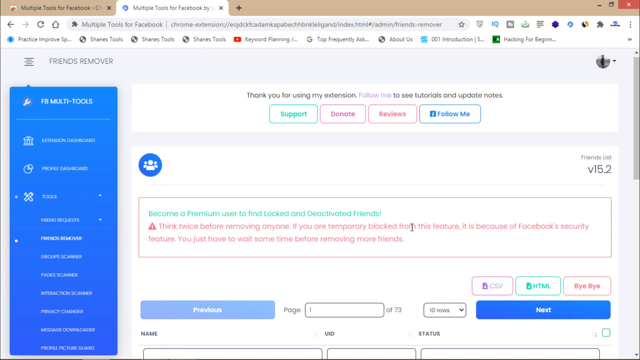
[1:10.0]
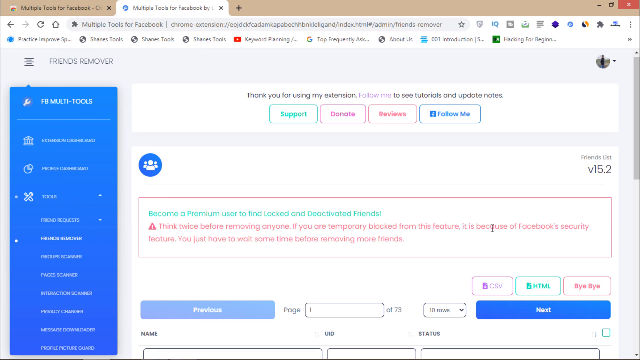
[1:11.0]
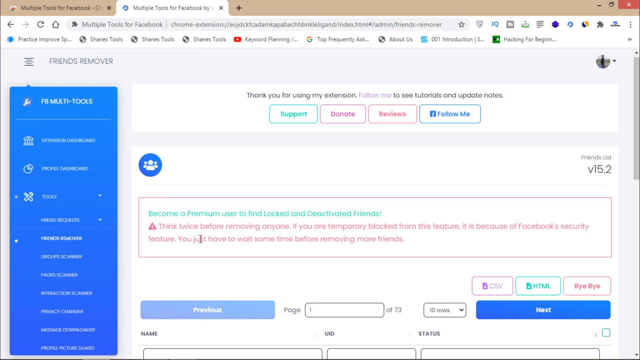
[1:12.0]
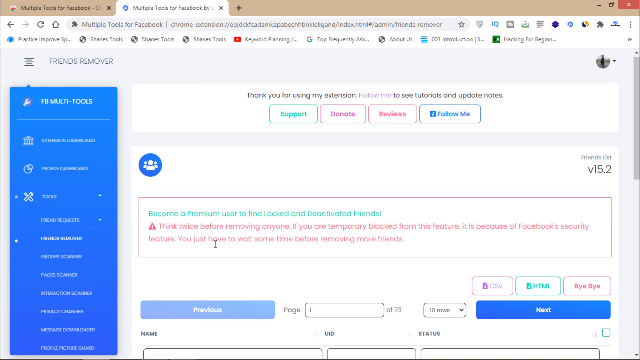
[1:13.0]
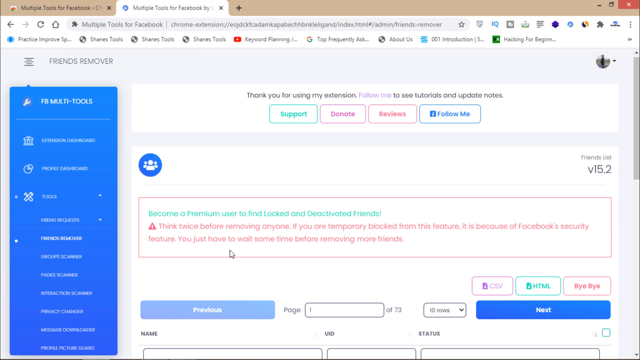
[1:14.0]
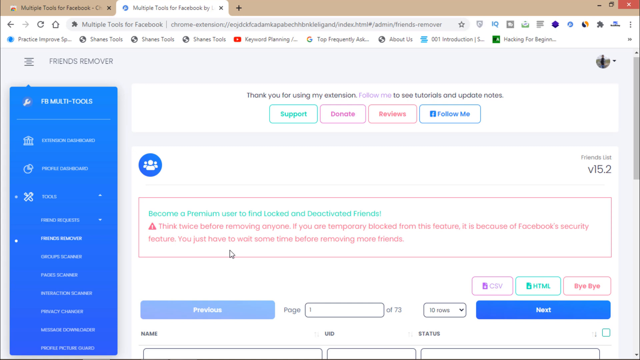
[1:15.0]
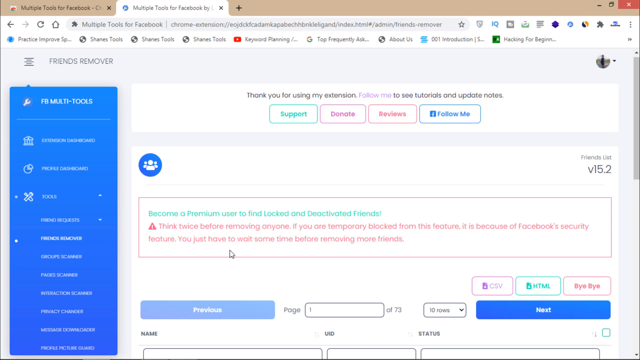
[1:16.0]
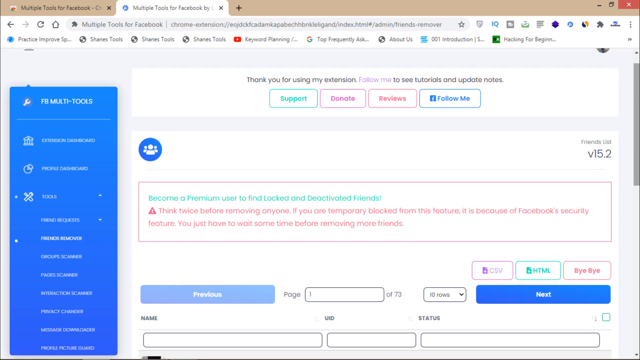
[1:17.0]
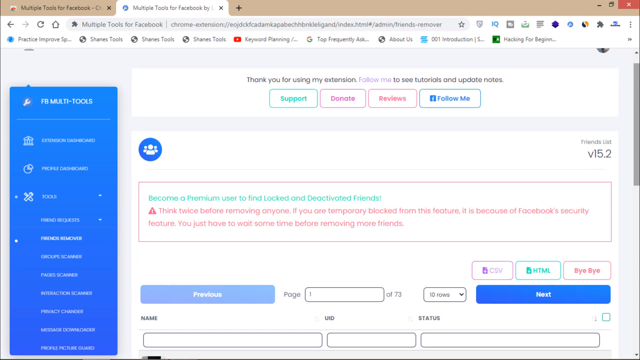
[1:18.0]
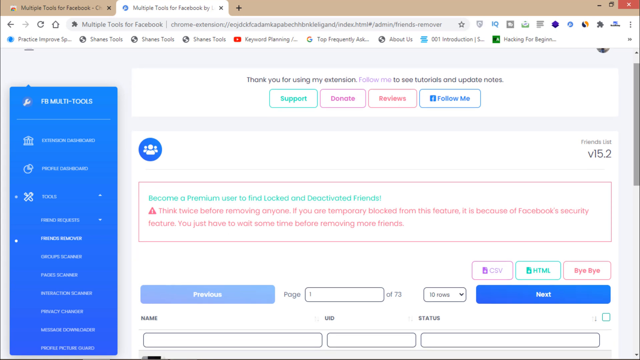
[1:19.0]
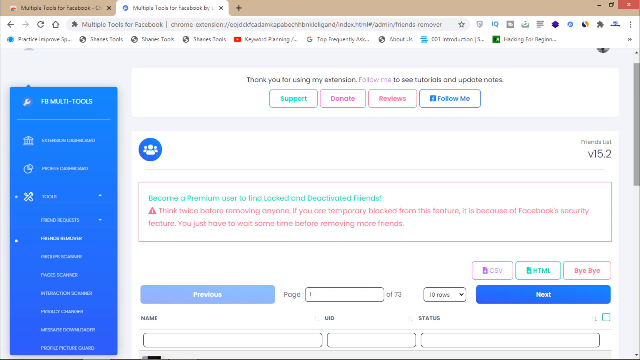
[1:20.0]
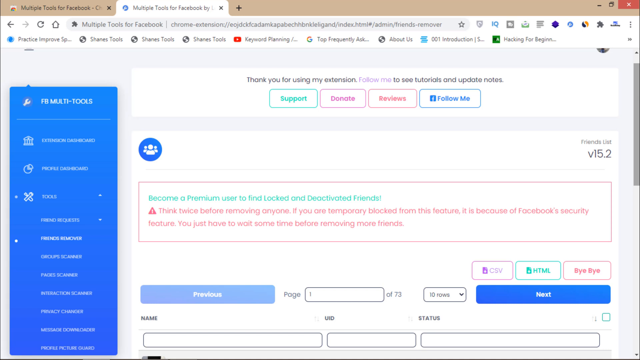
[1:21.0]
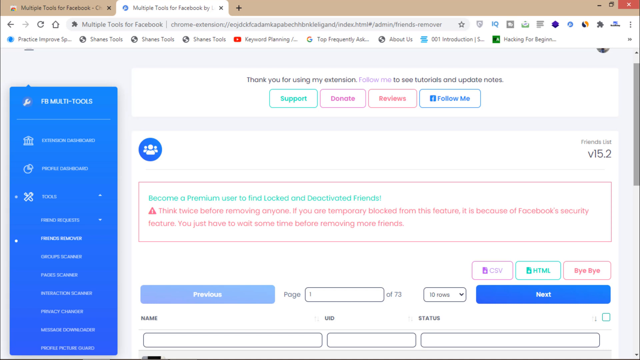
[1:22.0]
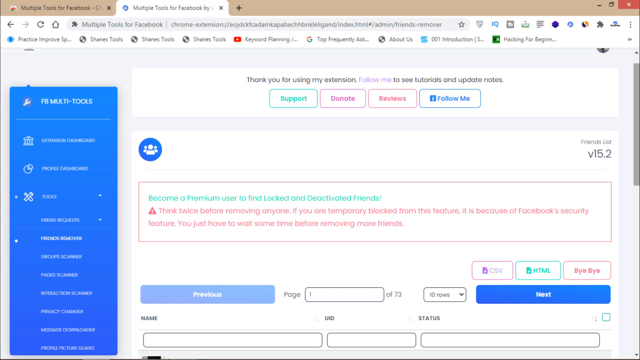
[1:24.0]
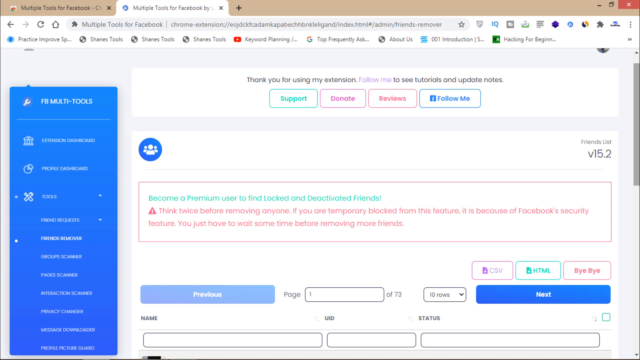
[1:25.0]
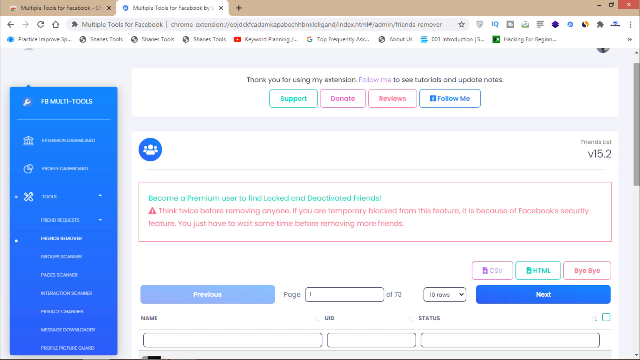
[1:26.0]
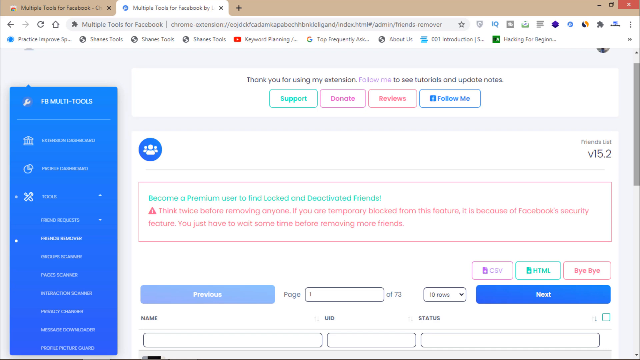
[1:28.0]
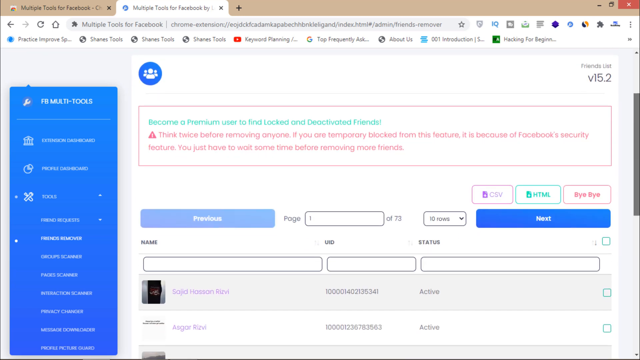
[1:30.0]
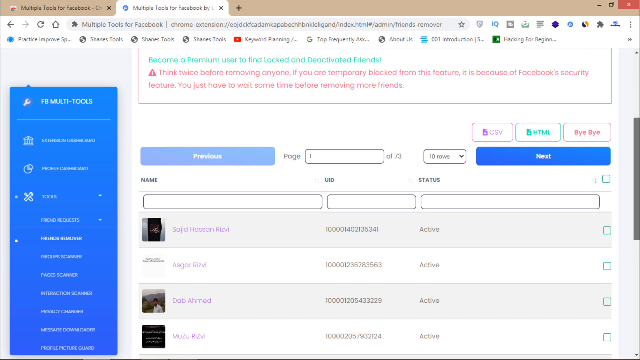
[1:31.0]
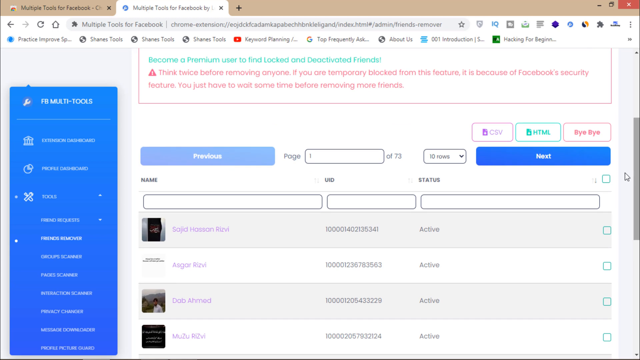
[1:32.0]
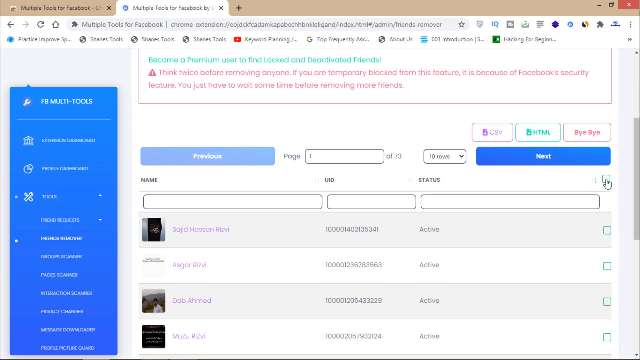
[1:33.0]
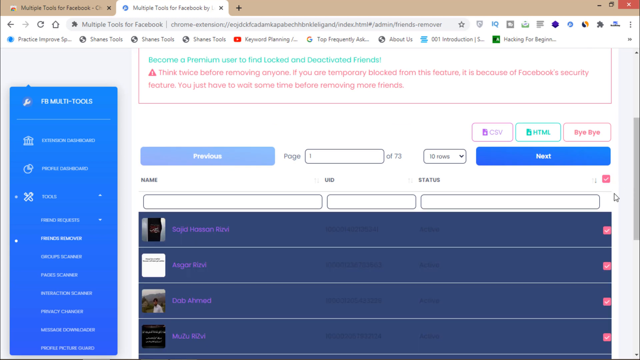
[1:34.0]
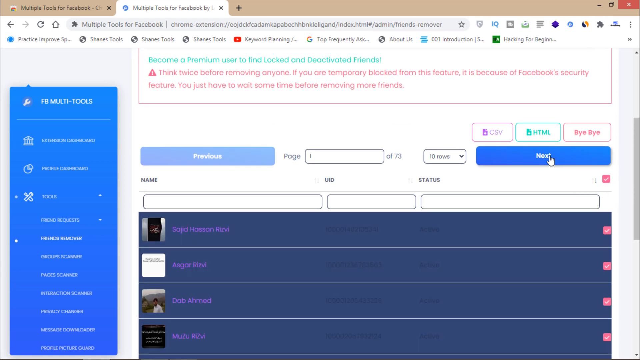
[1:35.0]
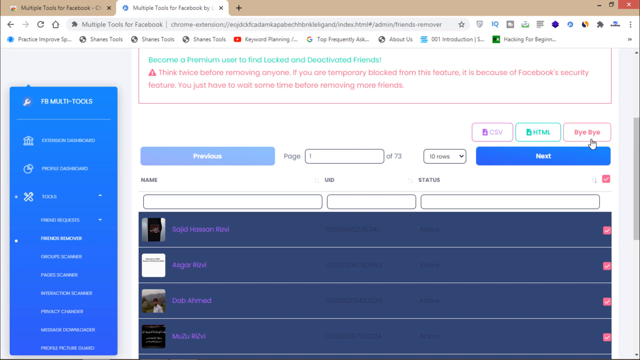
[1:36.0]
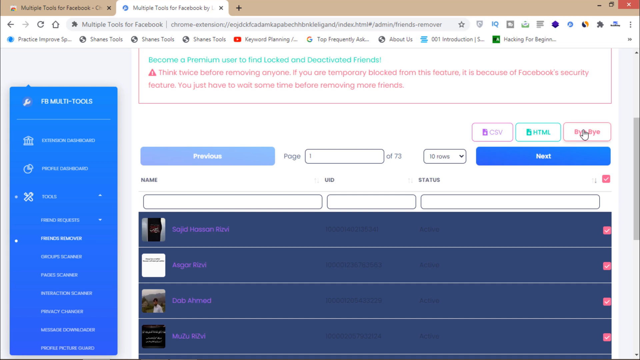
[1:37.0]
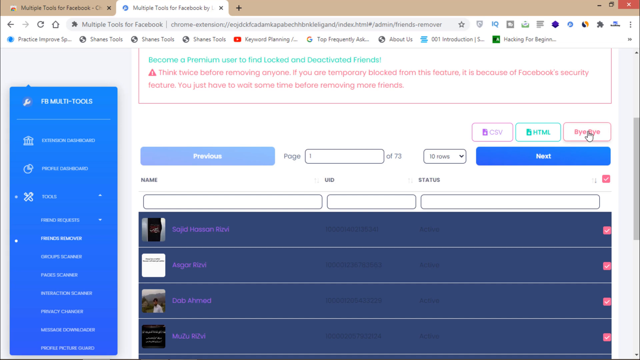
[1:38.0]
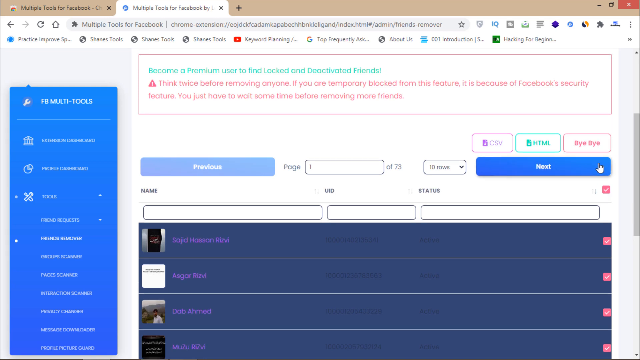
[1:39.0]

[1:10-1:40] The multiple tools for Facebook extension page shows the text "Thanks for using my extension. Follow me to see tutorials and update notes" along with "support," "donate," "reviews" and "follow me," and a notice about becoming a premium user to find locked and deactivated friends and thinking twice before removing anyone, since temporary blocks come from Facebook's security feature and require waiting before removing more friends. For most of the shot the same page stays on screen with no activity. The view then goes down to the friends list, and a group of friends is highlighted. There is a "bye bye" button, and it looks like the user is about to click it as the shot ends.